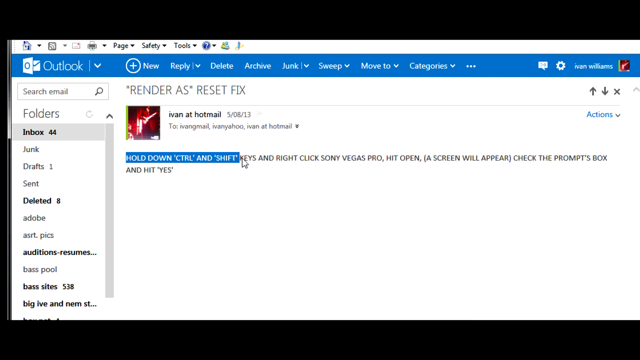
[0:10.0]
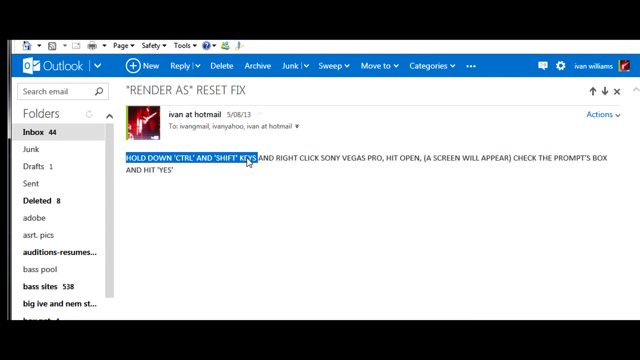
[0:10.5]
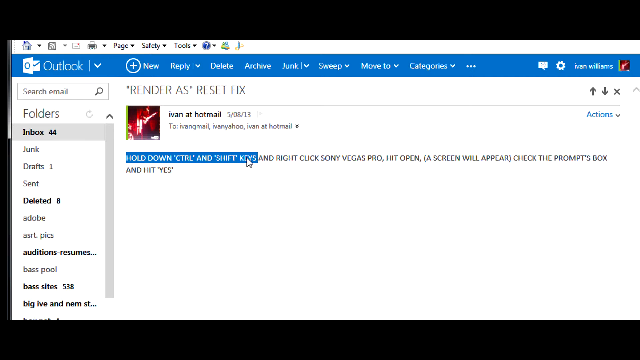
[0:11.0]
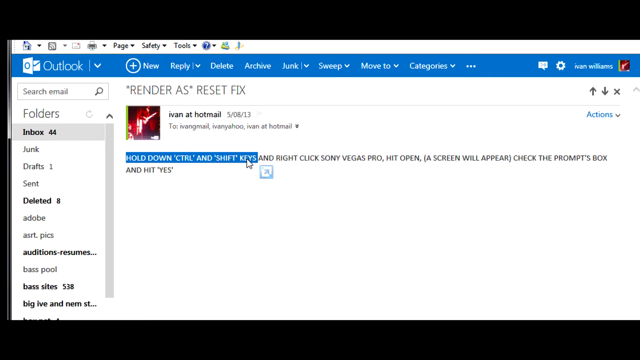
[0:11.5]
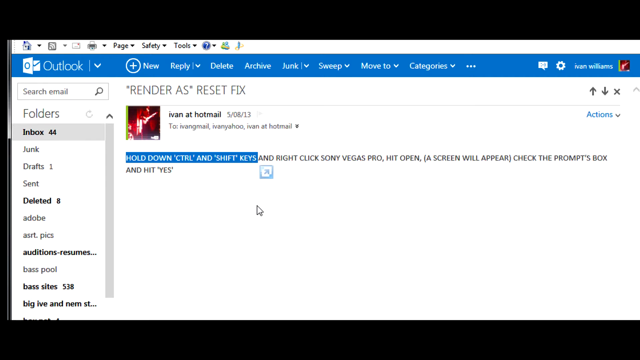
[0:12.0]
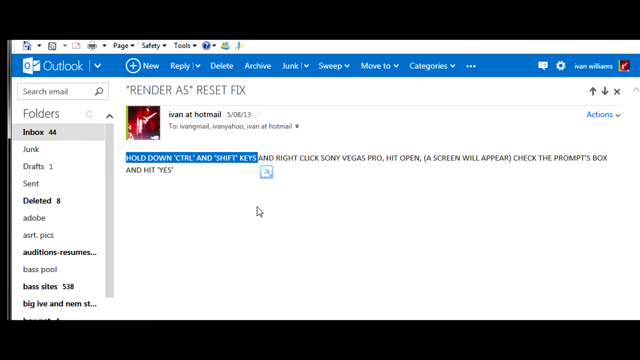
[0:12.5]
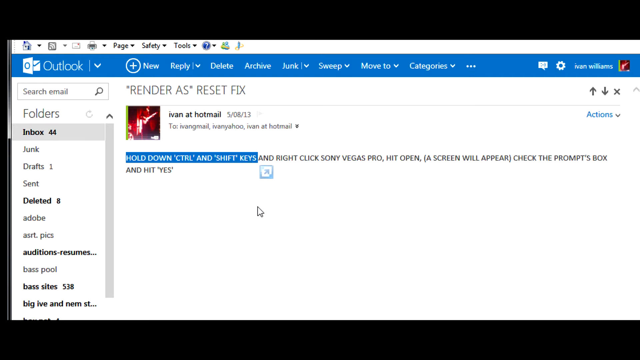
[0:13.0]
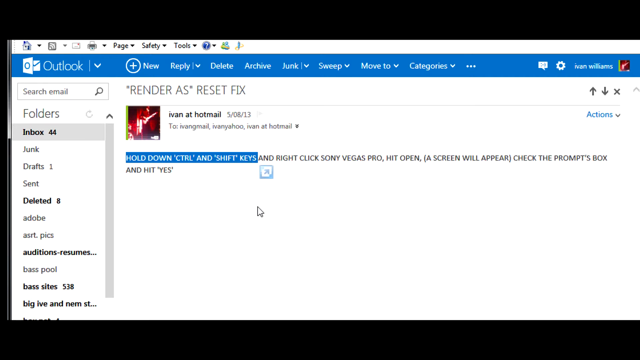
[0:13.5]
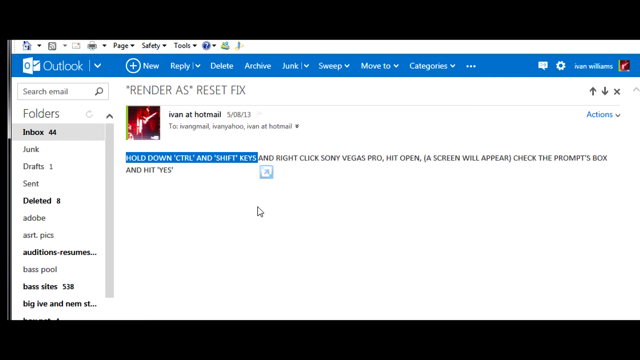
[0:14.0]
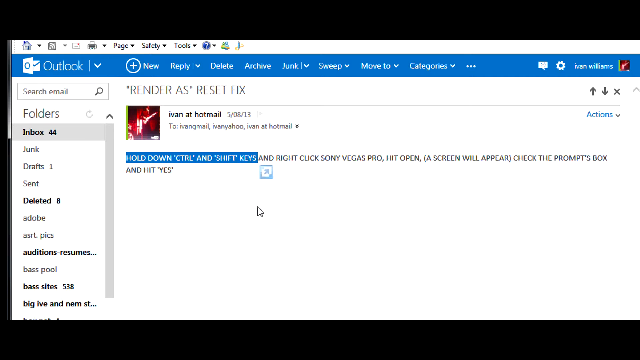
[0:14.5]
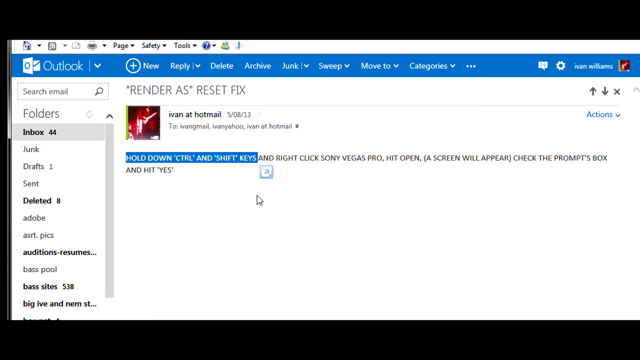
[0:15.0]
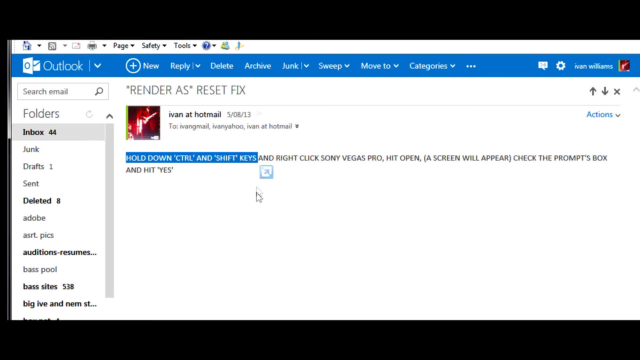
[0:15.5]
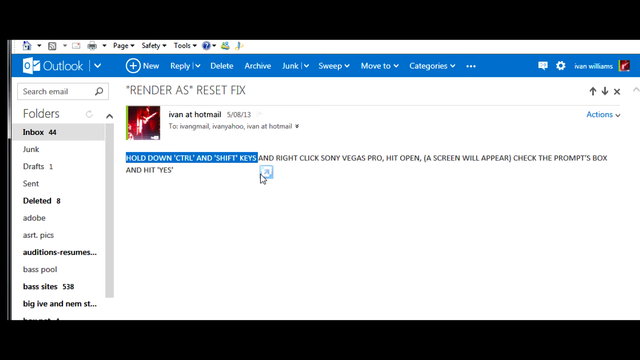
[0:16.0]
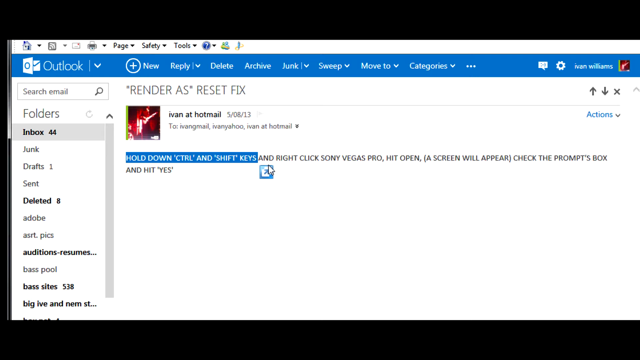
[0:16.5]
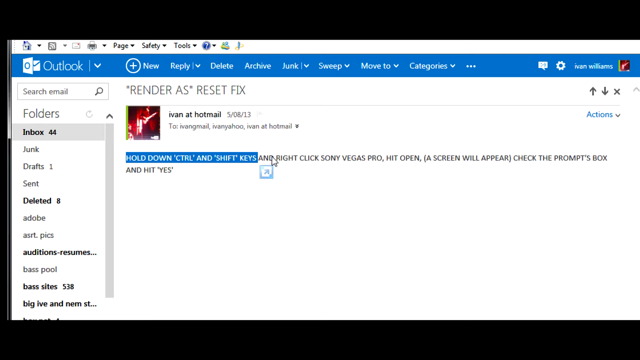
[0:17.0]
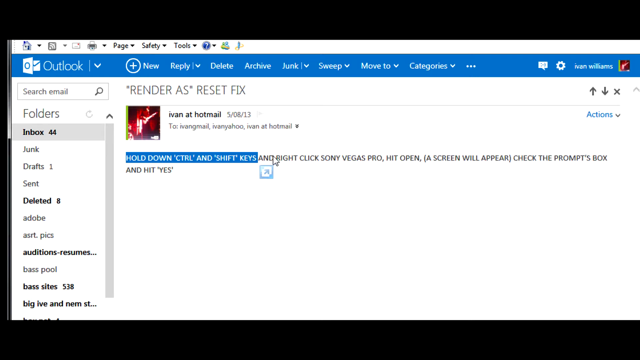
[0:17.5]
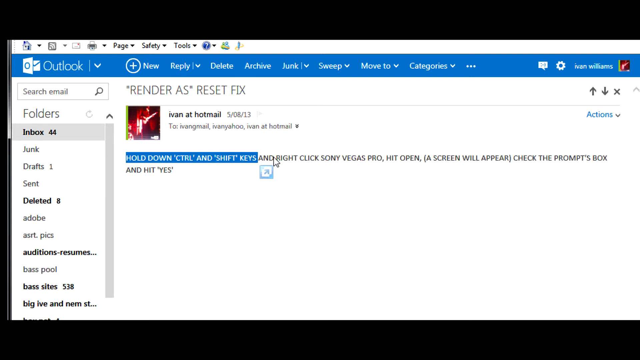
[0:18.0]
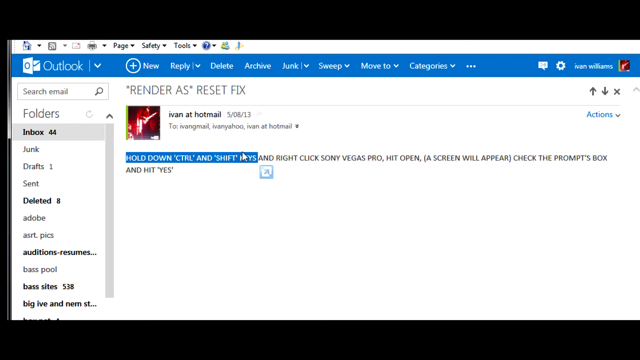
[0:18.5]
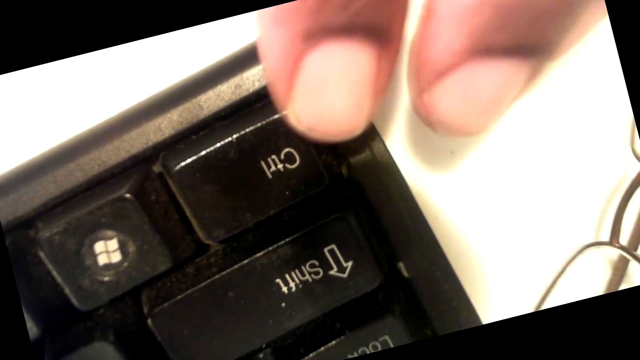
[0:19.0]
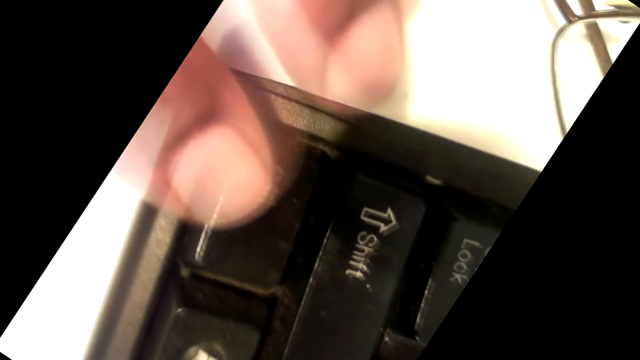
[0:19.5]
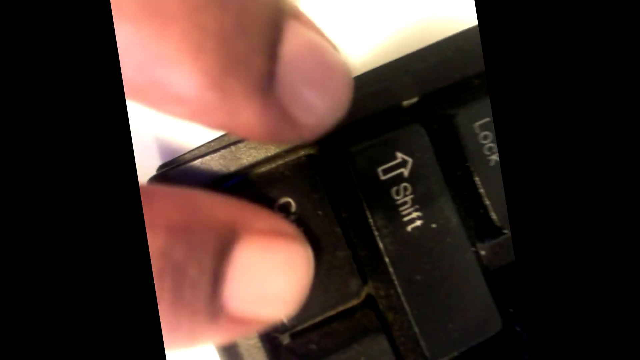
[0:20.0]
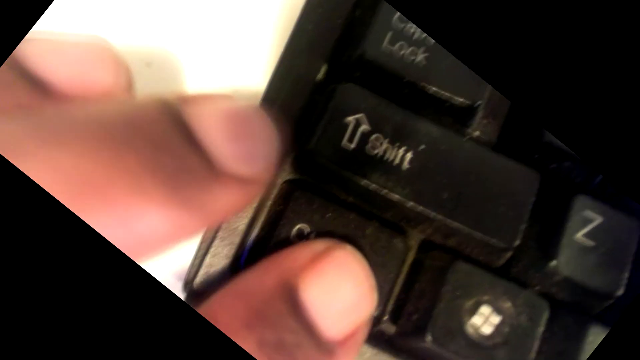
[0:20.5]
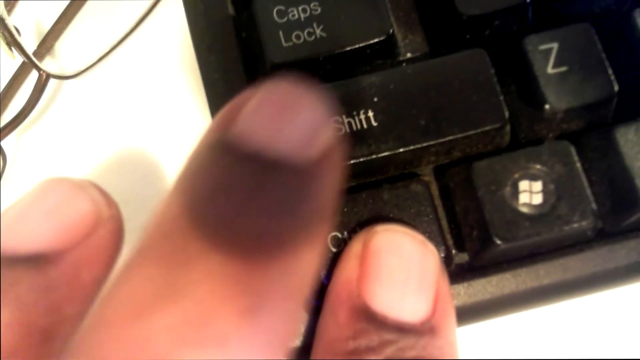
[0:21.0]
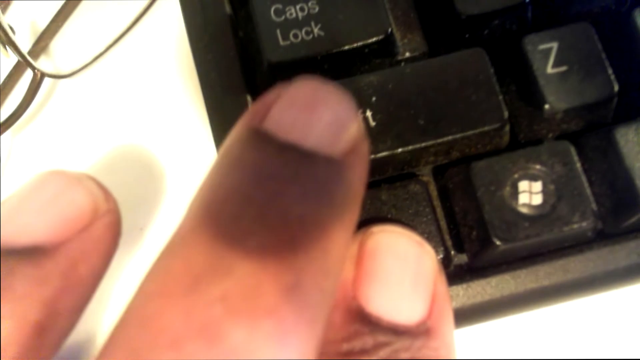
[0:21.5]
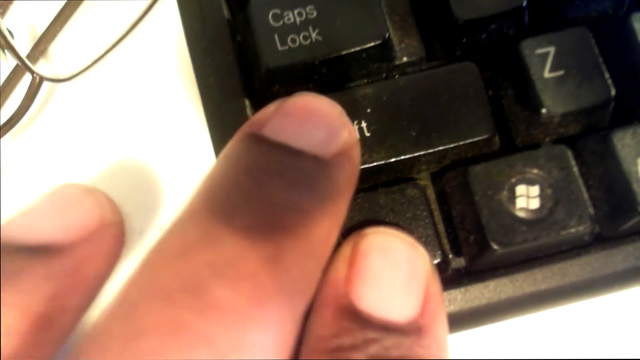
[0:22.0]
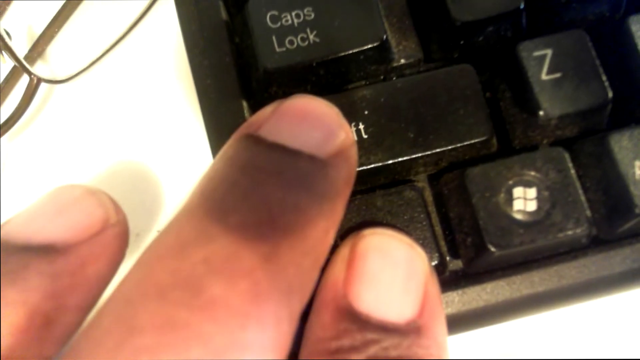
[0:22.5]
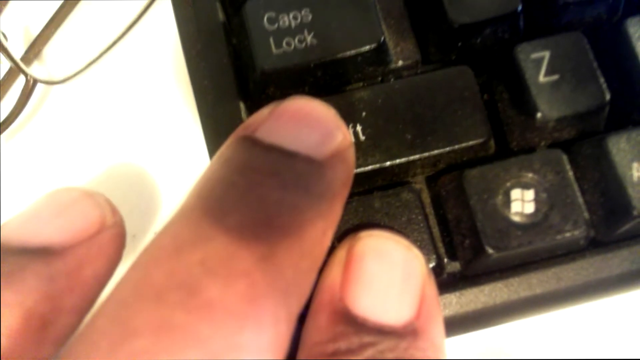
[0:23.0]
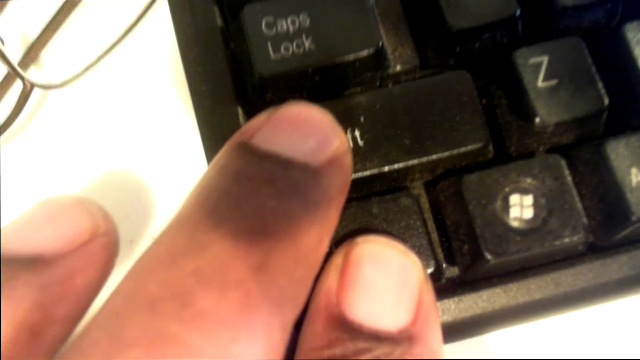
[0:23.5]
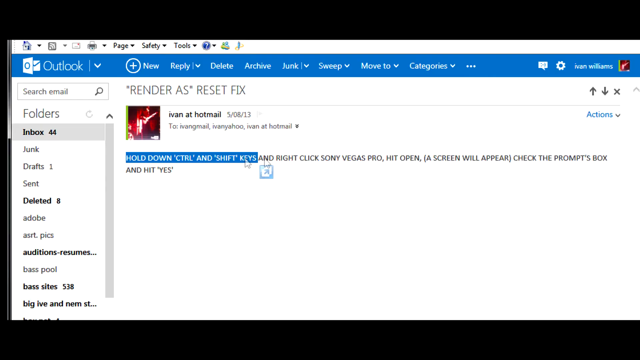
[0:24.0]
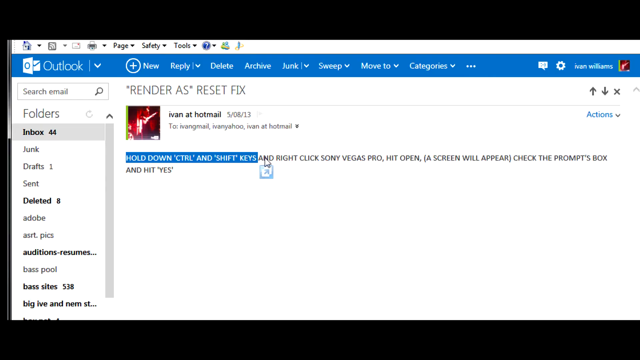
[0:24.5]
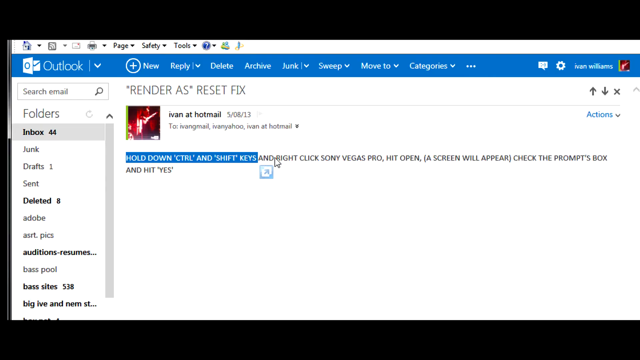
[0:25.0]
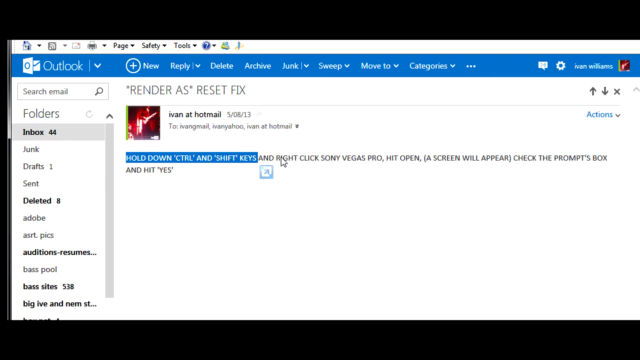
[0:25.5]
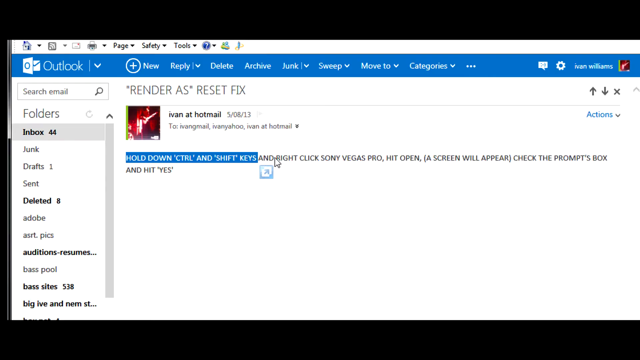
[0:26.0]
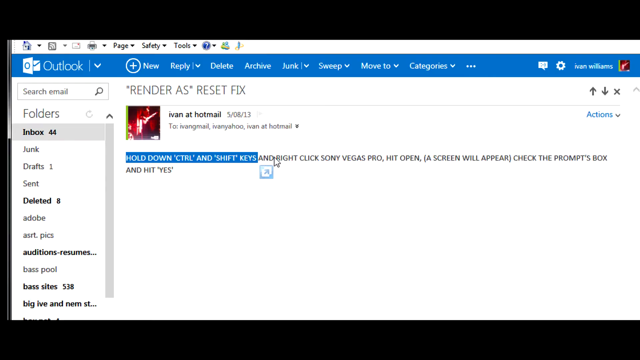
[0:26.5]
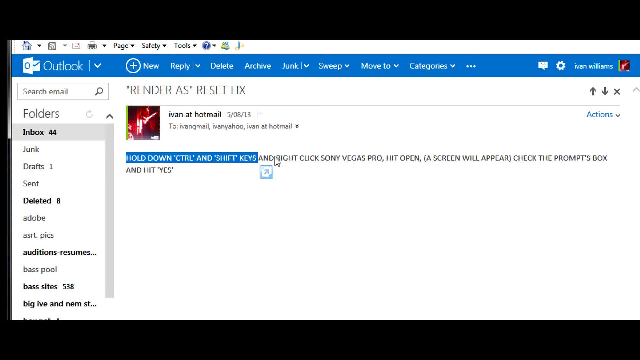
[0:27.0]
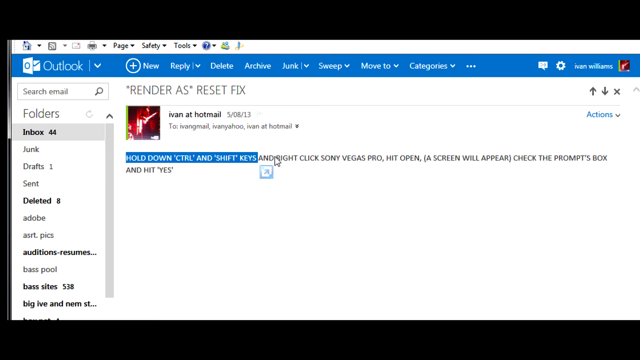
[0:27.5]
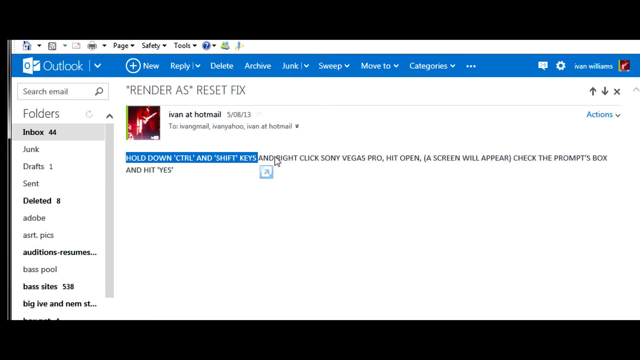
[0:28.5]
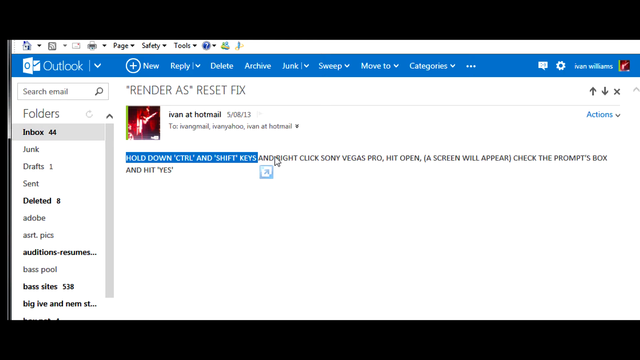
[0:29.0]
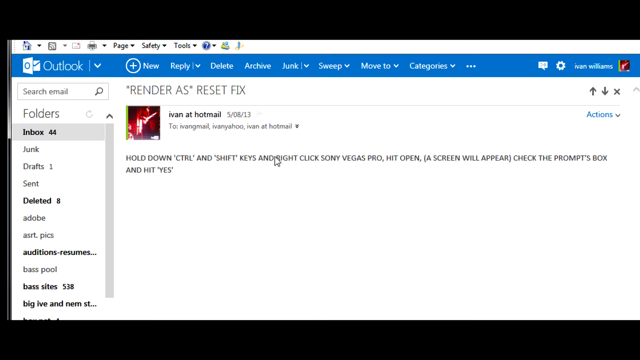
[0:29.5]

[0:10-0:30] The highlighted portion in the body of the email apparently reads "hold down CTRL and shift keys." Below, on the bottom right of the highlighted text, there is a little light blue and white box. The screen then transitions by spinning, apparently clockwise, revealing a portion of a computer keyboard. When the spinning stops, there are eyeglasses at the top left of the frame and three fingers of someone's left hand at the bottom left. With their index finger they hold down the CTRL button and the shift key for about a second, then lift both fingers. The view returns to the initial email, where the person holding the mouse starts highlighting different text, "right-click Sony," and the previously highlighted text is no longer highlighted.